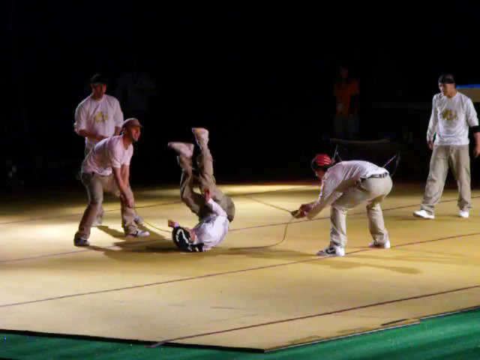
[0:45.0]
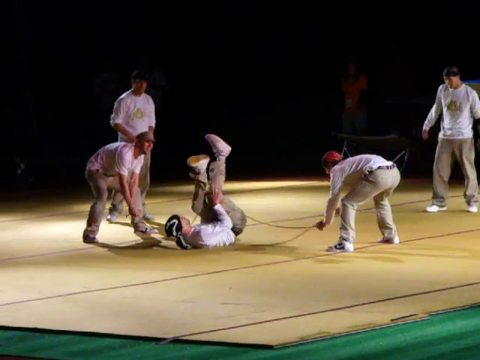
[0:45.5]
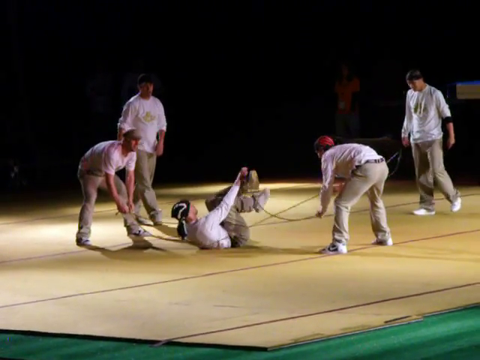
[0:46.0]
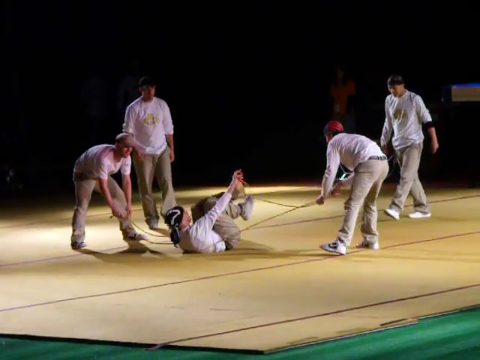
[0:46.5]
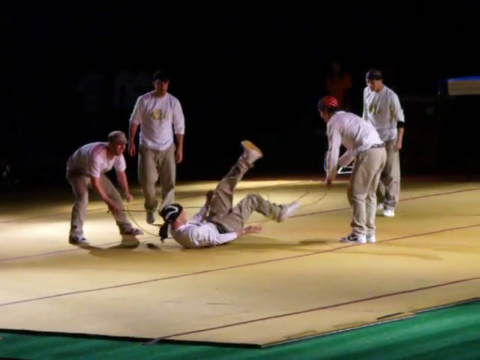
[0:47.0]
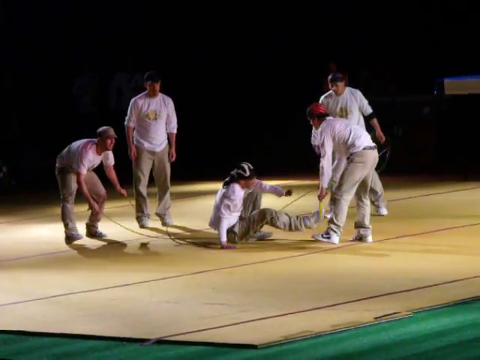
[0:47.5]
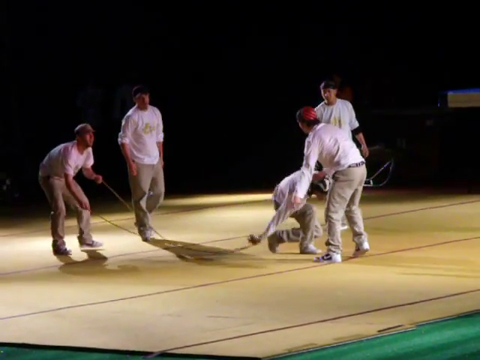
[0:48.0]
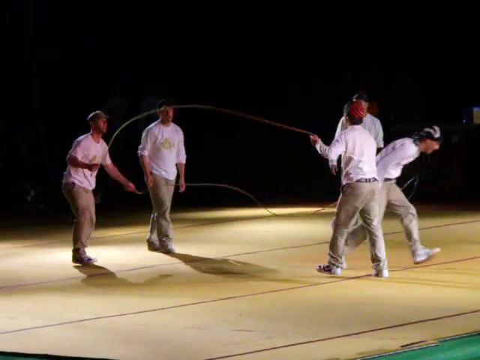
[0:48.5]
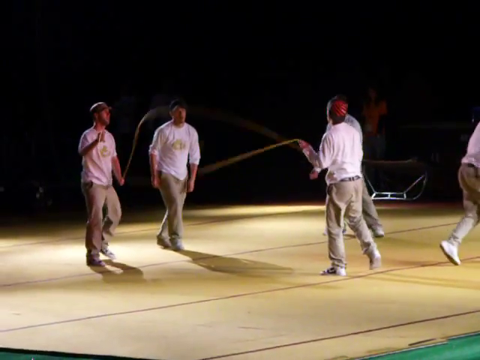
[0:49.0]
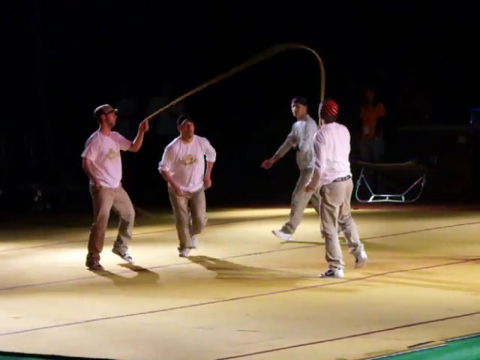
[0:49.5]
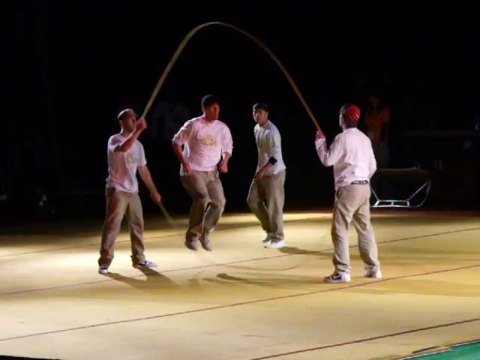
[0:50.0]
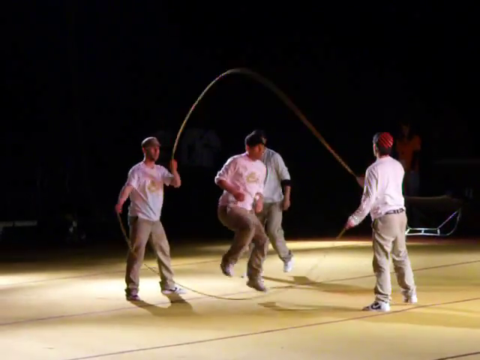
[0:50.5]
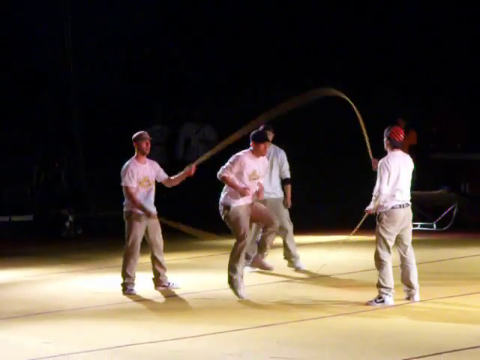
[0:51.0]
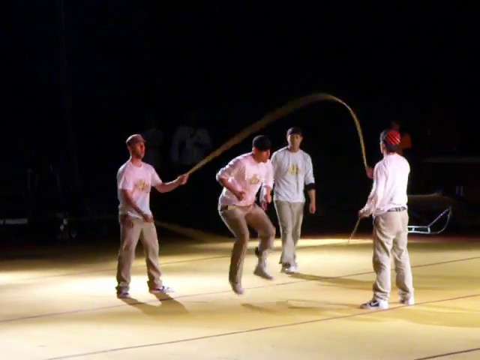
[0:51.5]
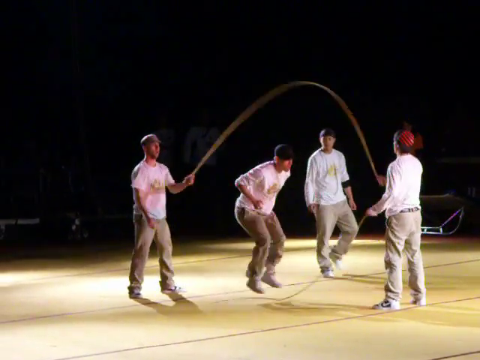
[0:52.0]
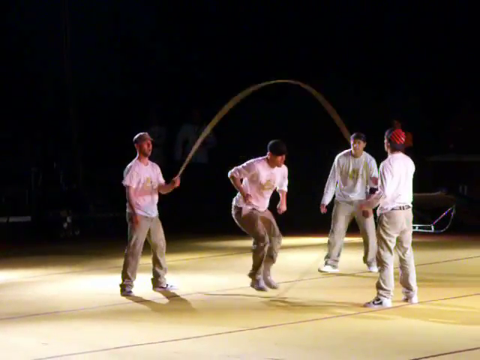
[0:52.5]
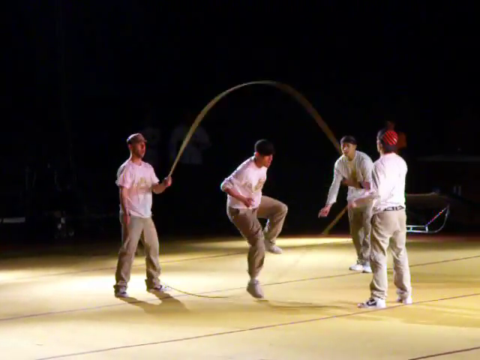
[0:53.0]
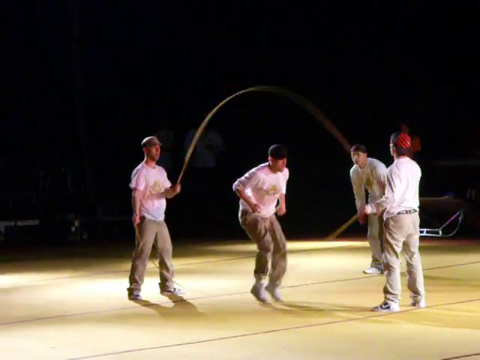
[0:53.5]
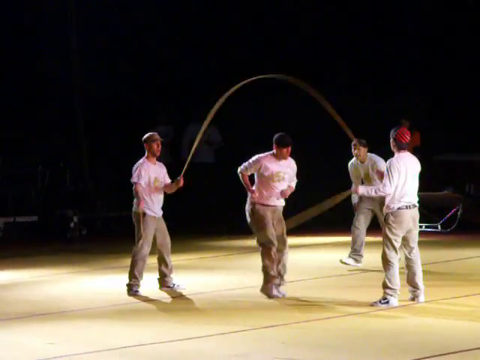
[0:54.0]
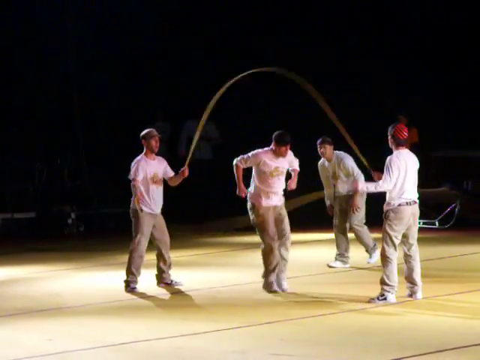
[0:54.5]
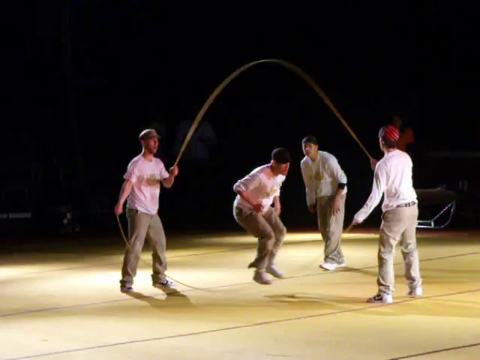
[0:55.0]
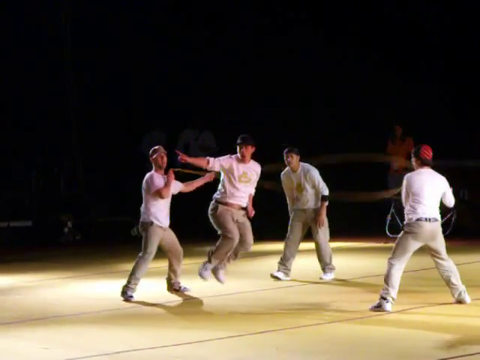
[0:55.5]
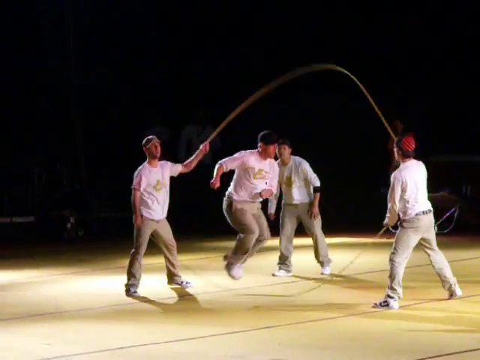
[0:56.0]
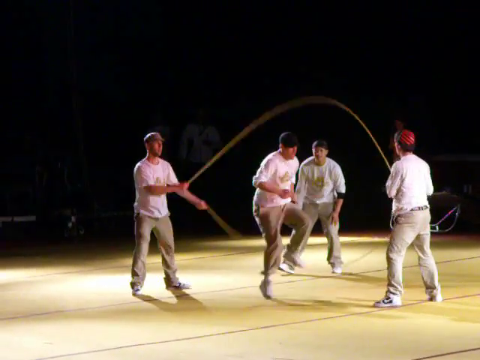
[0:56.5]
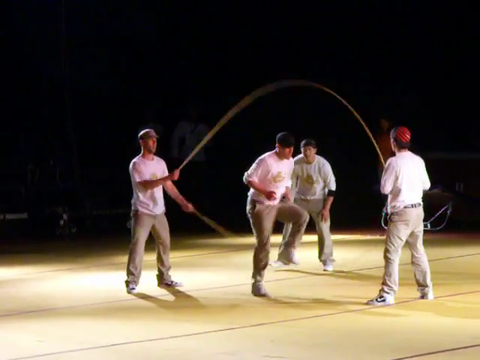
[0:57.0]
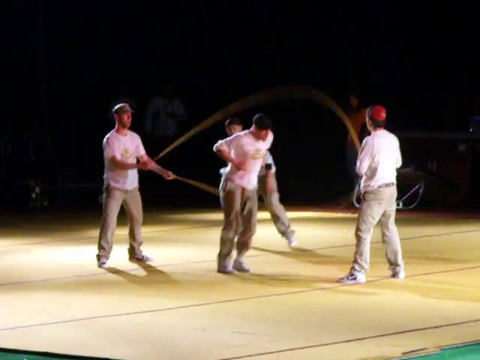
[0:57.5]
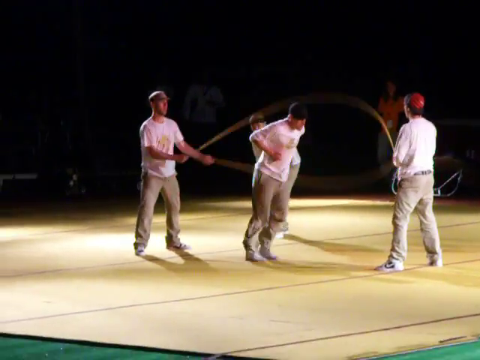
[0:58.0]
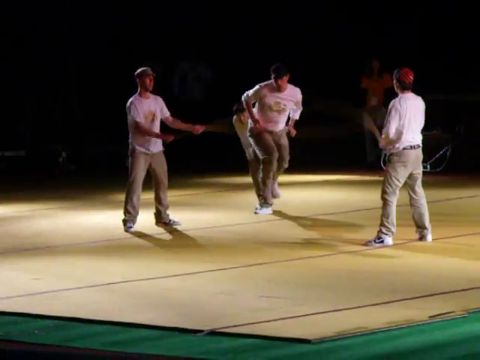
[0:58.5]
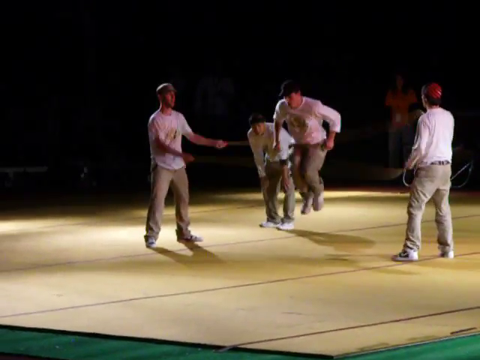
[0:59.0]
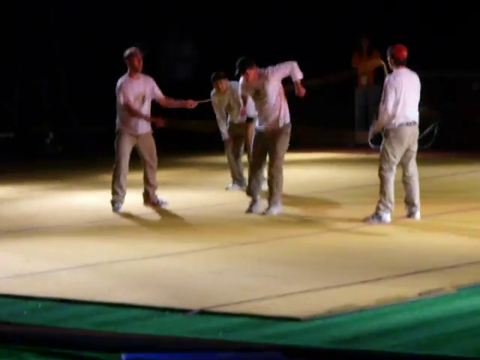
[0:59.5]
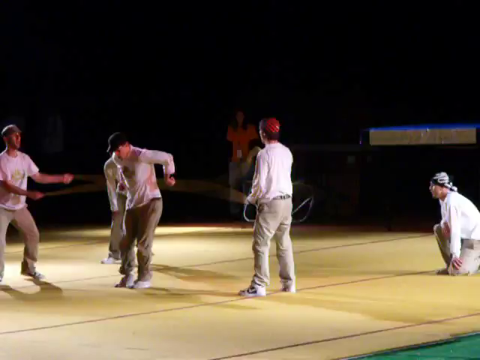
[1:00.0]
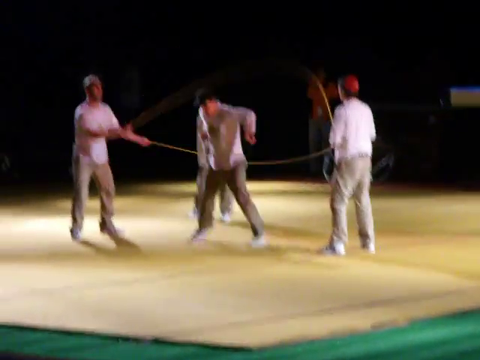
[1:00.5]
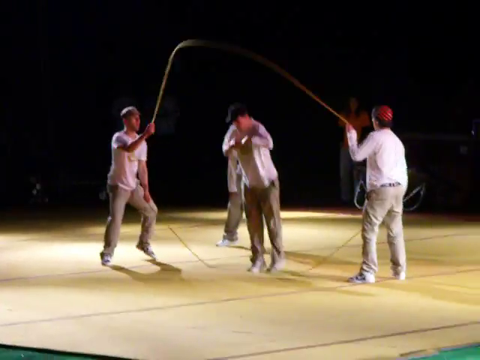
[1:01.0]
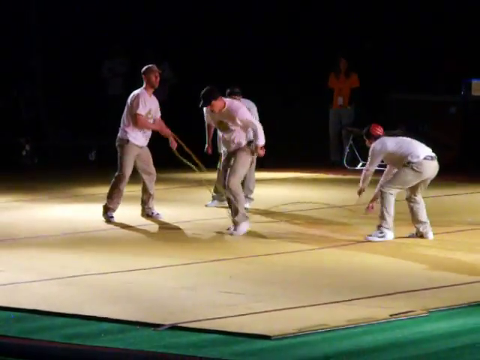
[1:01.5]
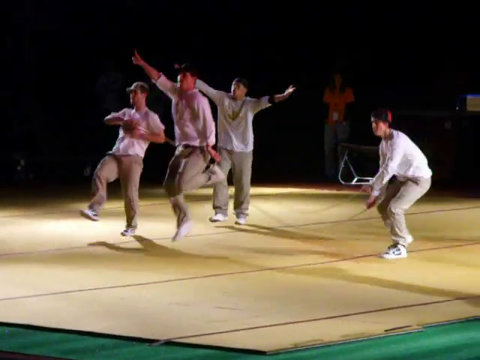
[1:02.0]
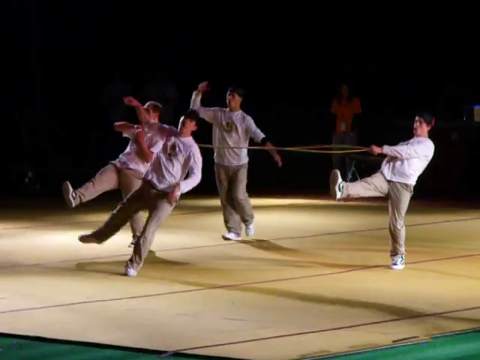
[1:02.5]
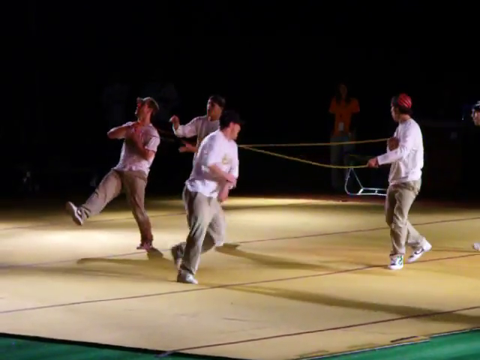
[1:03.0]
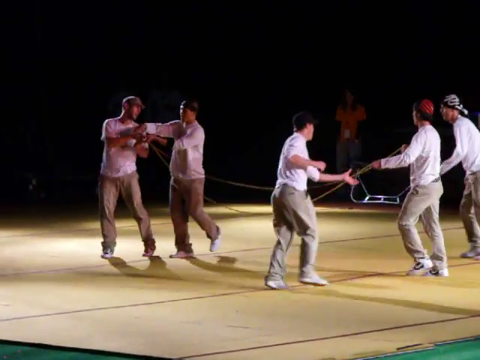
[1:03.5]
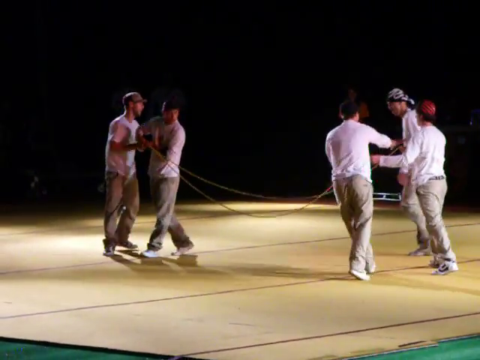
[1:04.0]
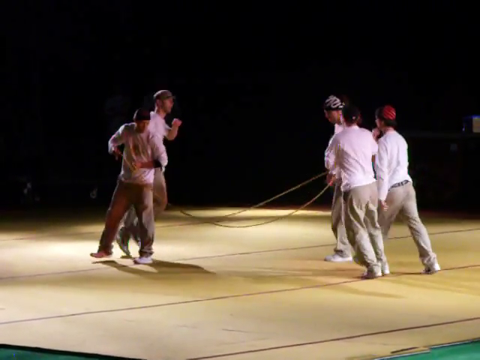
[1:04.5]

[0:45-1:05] The performer stays on his back for a bit; this seems not really part of the performance, almost as if he is a little tangled in the ropes and they pause to get him disentangled, although it may just be a moment in the performance. Another team member then spends quite a while in the center of the double Dutch, doing fancy footwork: high knees, very short little jumps, then bigger, springier hops before returning to high knees and turning toward the person filming. As he starts to come out of the ropes, everyone turns toward that side and points in that direction. This creates a pause in the routine in which the rope turners are switched out with those who were waiting during the solo.